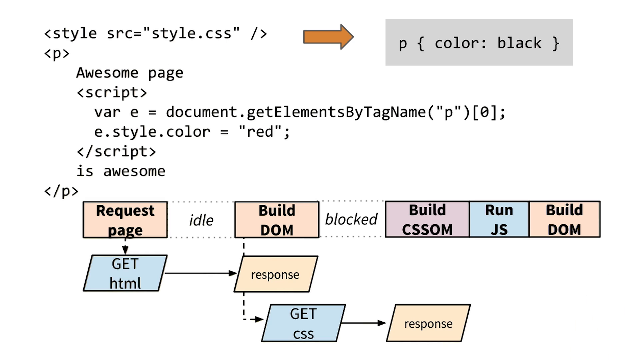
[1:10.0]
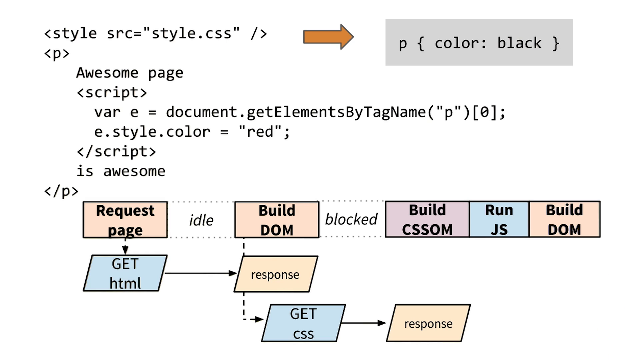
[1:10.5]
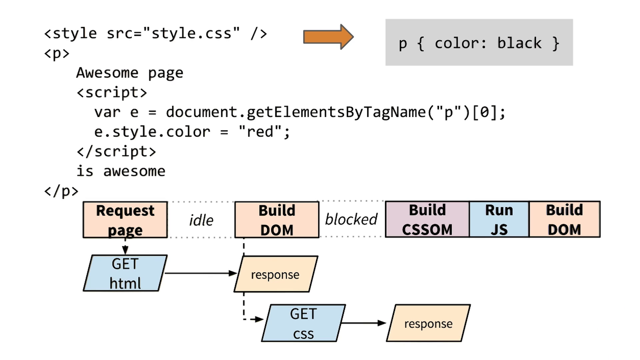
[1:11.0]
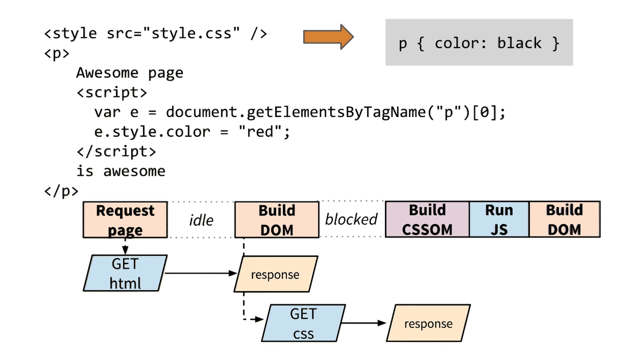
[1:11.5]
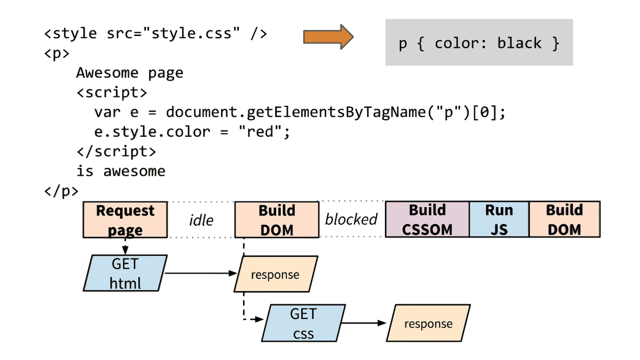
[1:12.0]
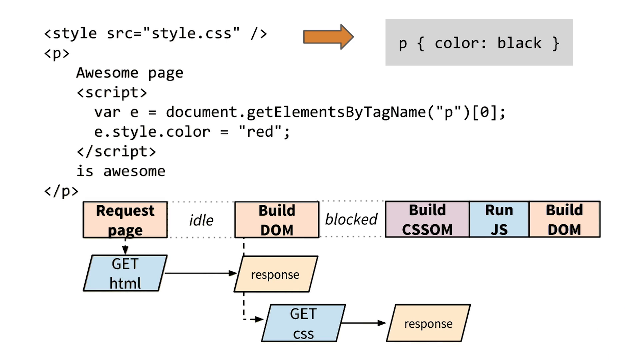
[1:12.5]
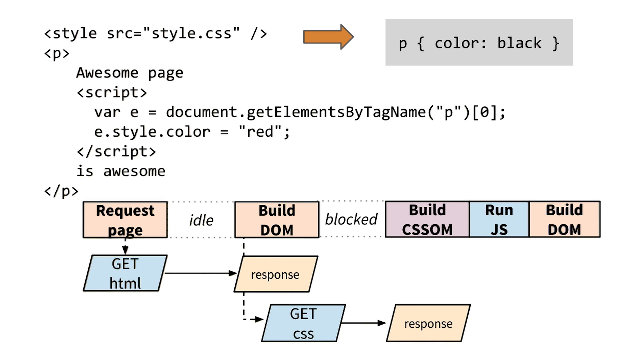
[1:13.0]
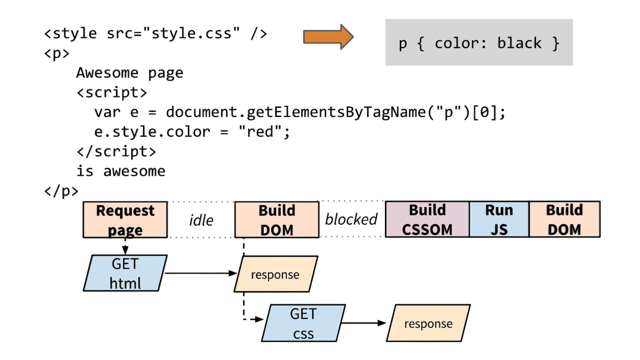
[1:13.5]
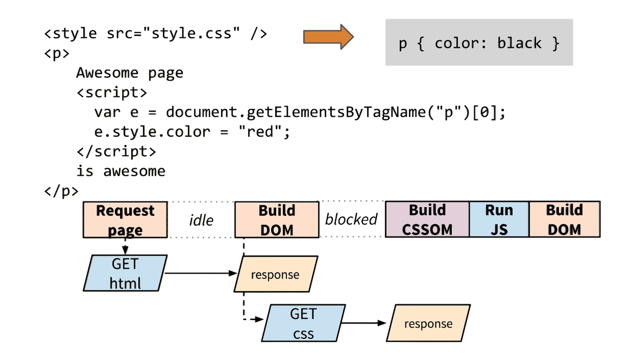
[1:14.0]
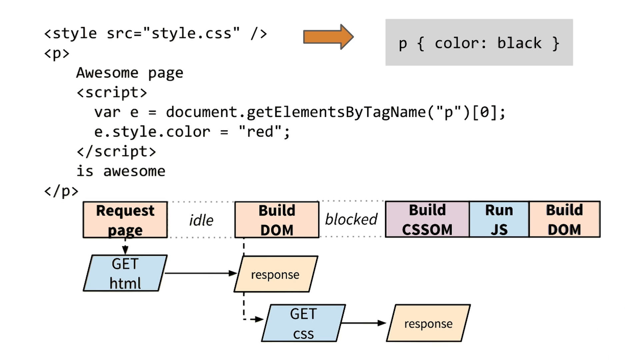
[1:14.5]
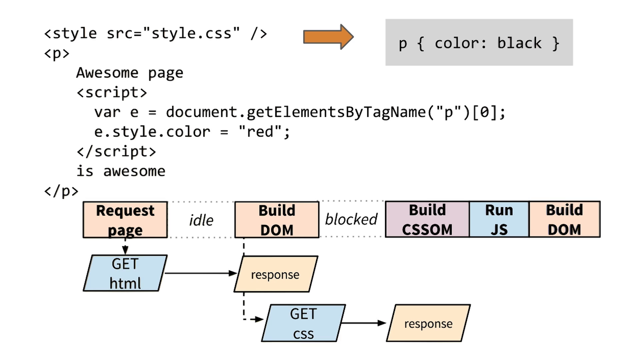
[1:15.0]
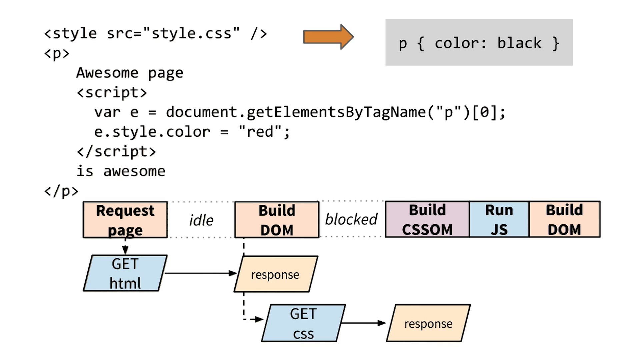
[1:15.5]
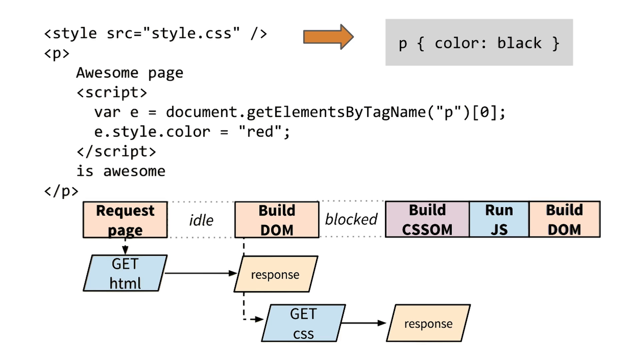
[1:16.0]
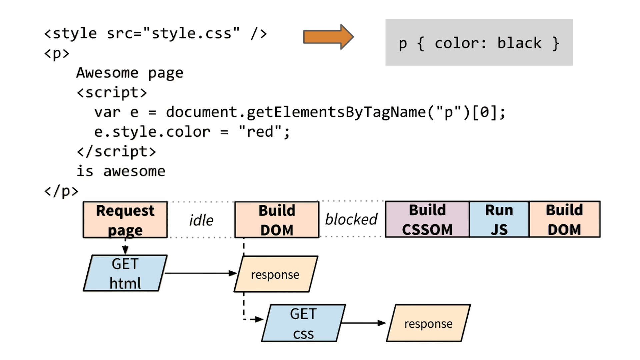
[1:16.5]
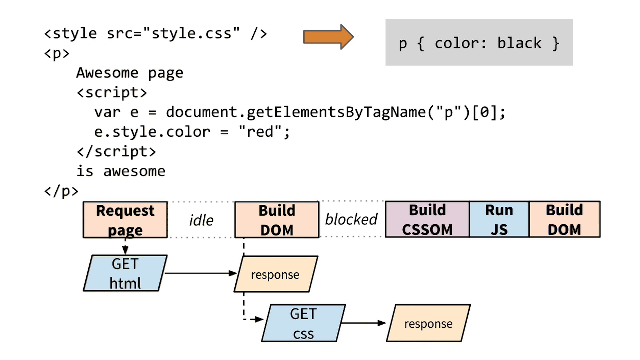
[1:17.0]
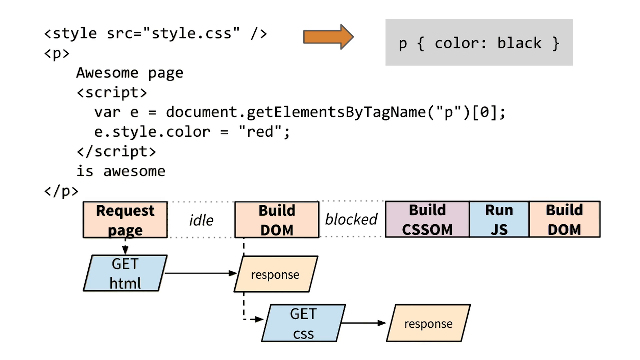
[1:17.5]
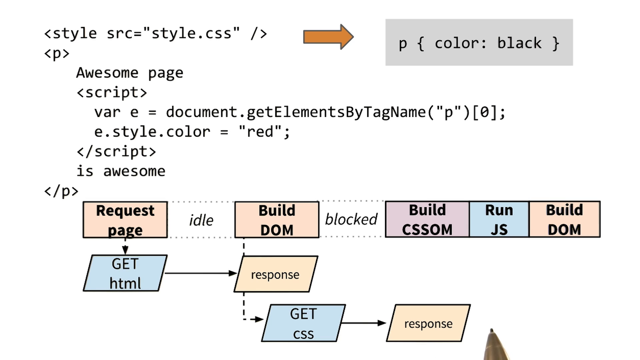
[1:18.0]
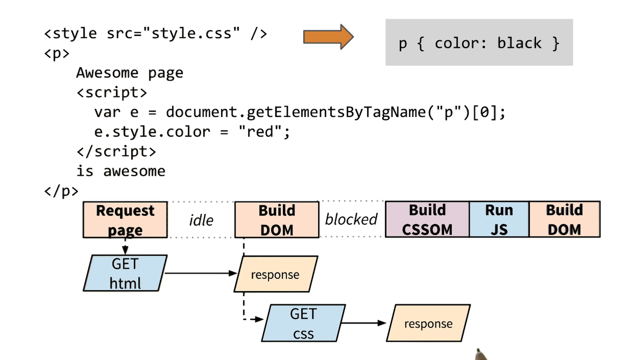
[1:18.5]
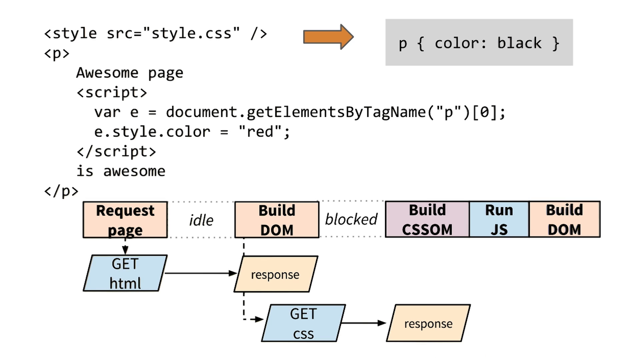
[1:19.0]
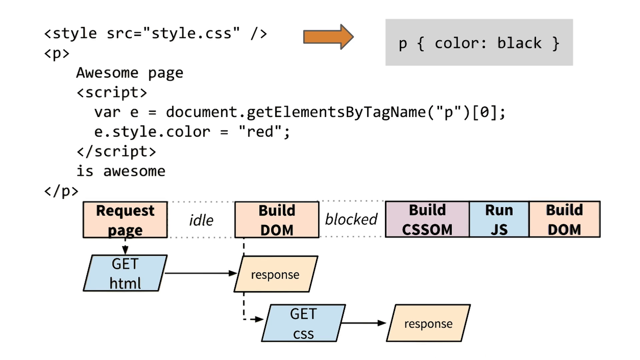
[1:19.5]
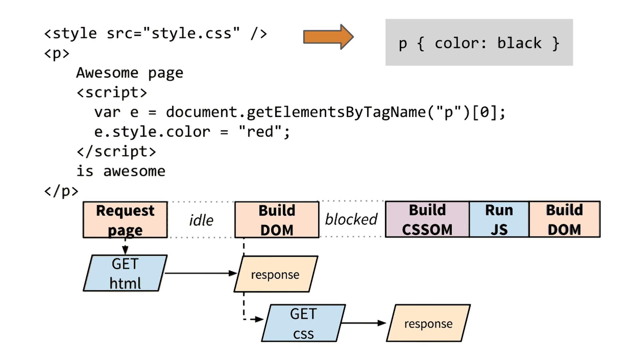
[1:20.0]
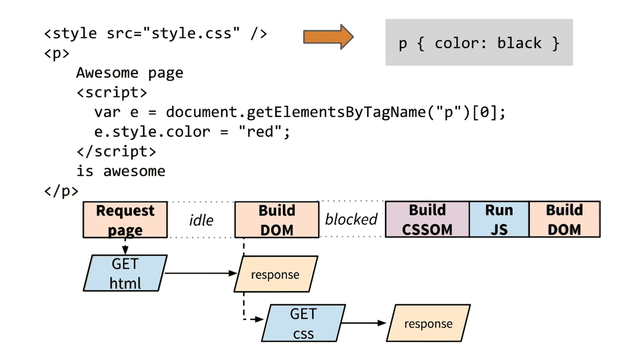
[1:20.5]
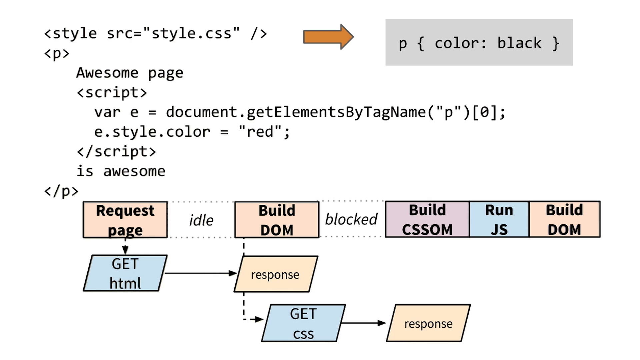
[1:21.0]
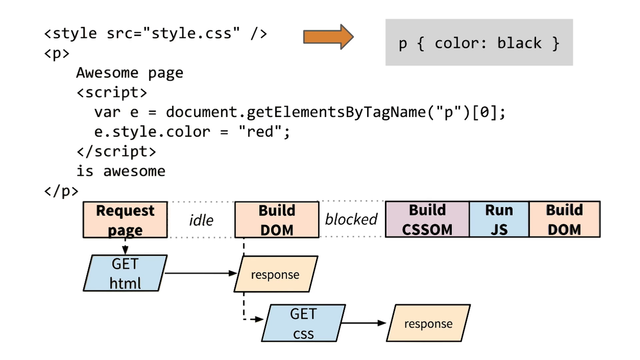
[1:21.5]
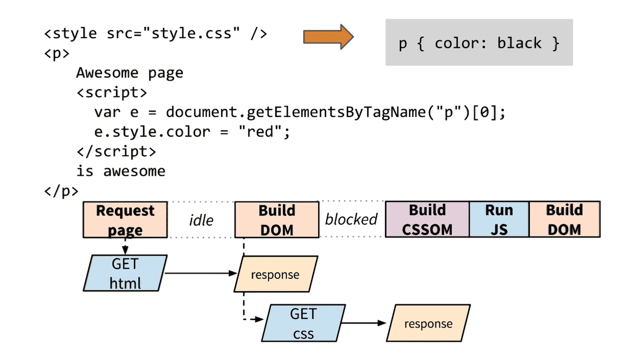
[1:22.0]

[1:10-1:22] The white background shows the entire code written out, with the map at the bottom of the page. The pen moves a little on the bottom side of the page, next to the response logo, which looks like a yellow rectangle at the bottom right side of the page.